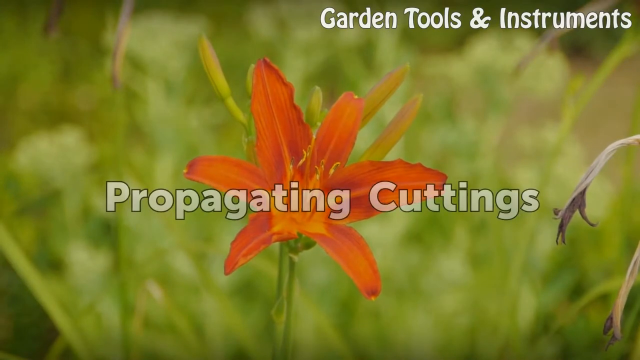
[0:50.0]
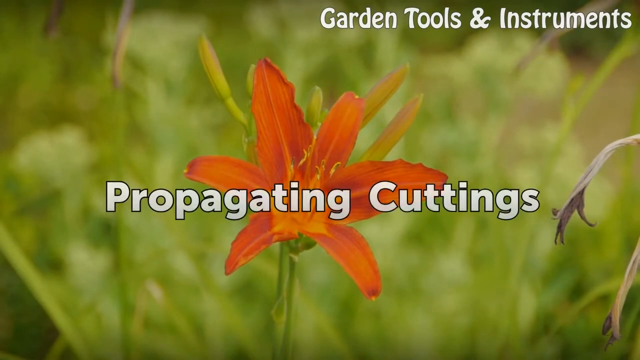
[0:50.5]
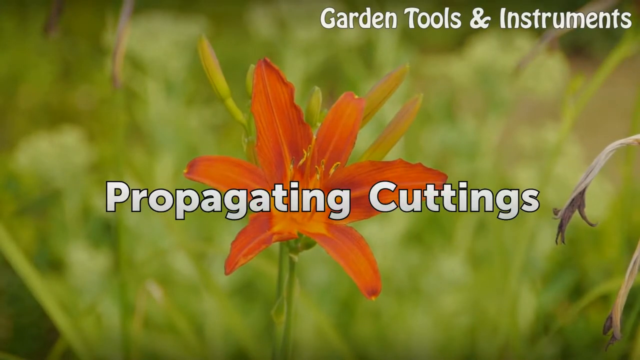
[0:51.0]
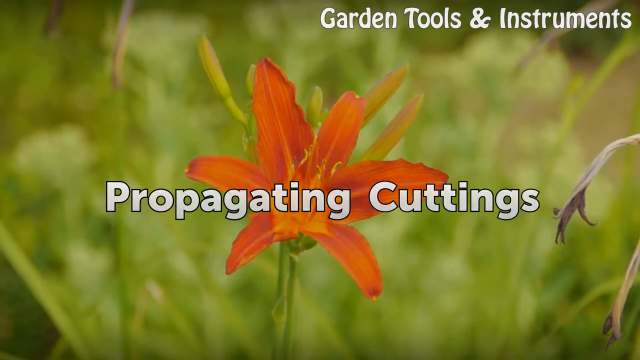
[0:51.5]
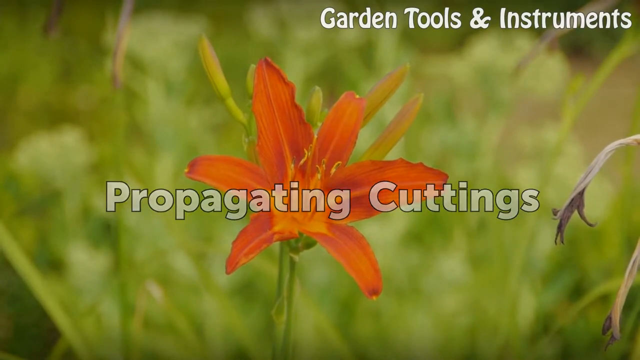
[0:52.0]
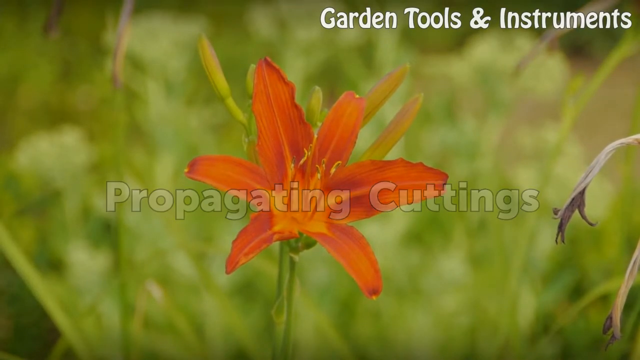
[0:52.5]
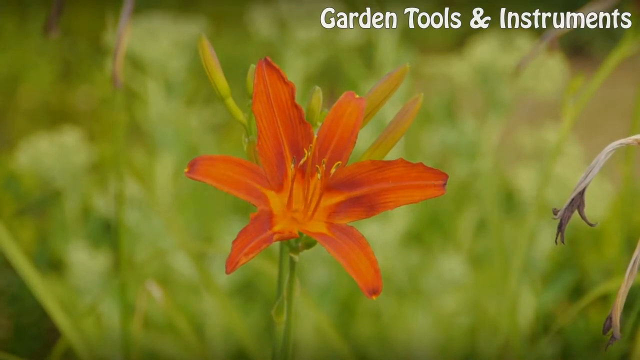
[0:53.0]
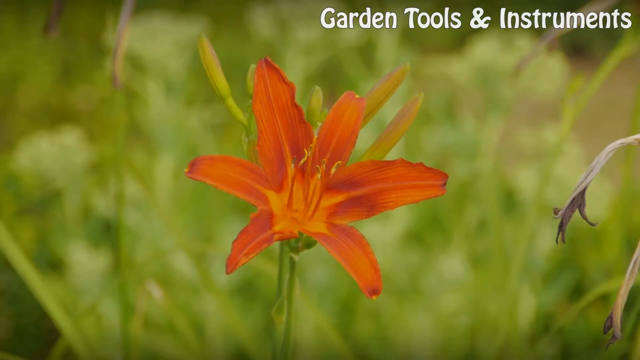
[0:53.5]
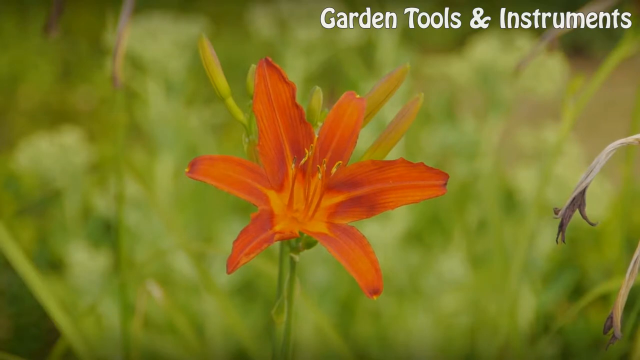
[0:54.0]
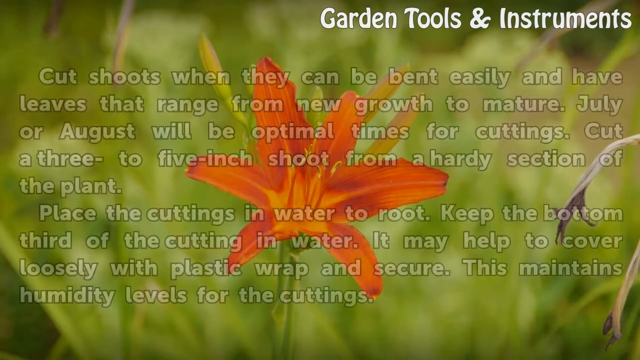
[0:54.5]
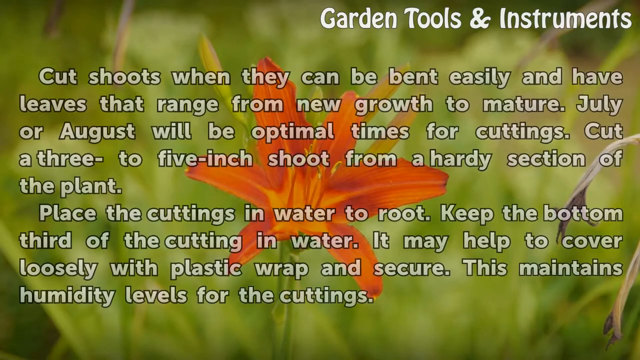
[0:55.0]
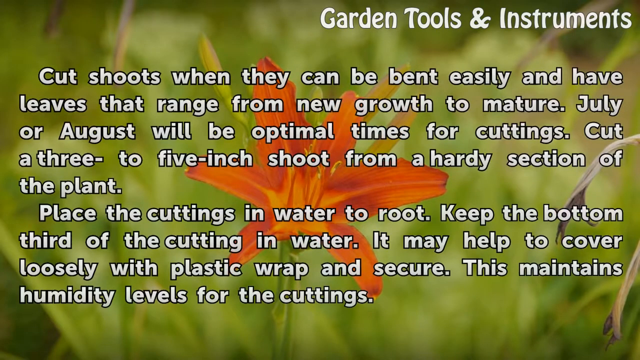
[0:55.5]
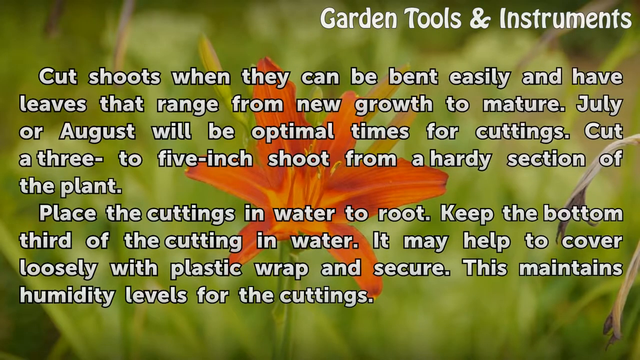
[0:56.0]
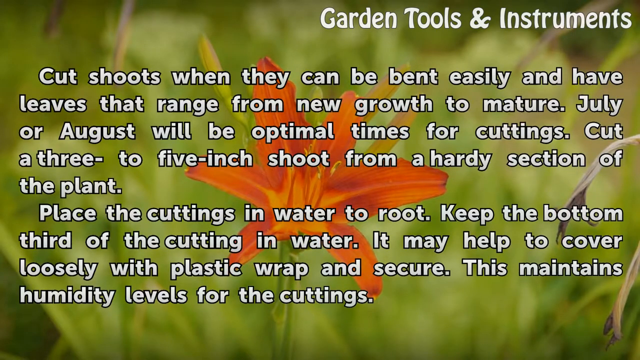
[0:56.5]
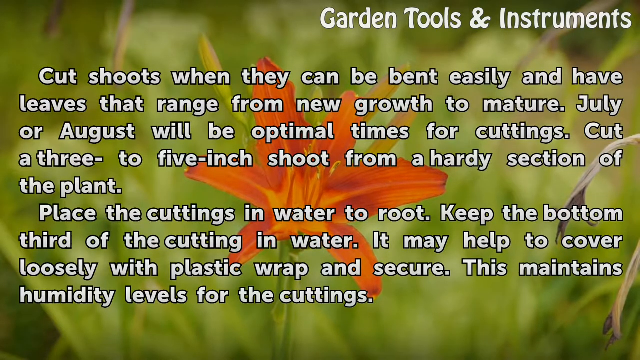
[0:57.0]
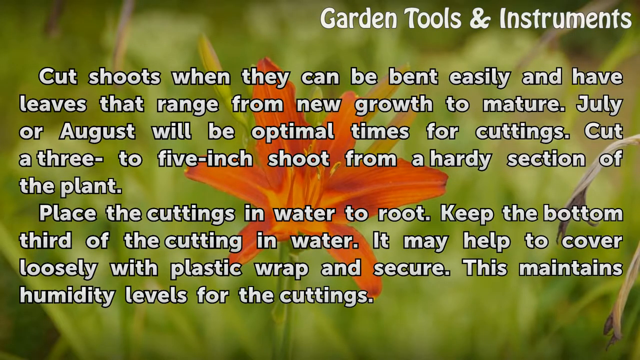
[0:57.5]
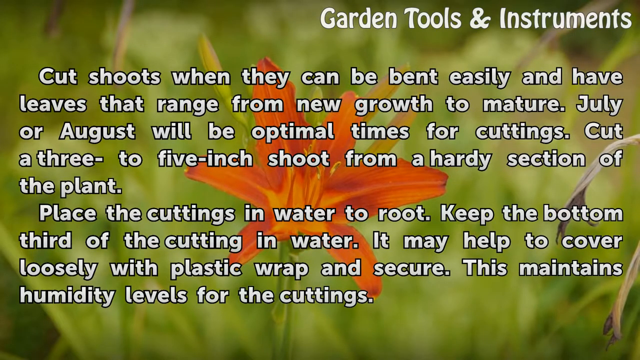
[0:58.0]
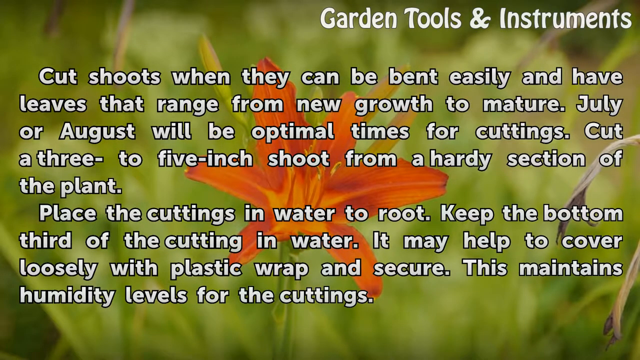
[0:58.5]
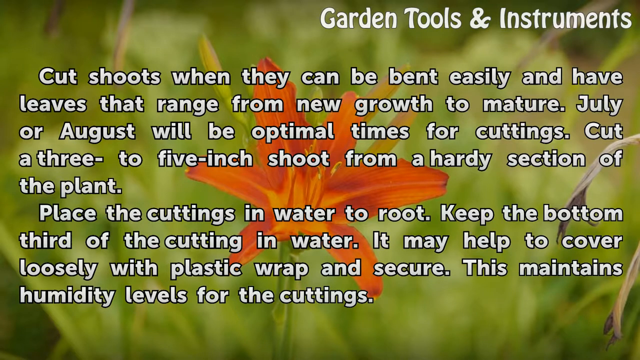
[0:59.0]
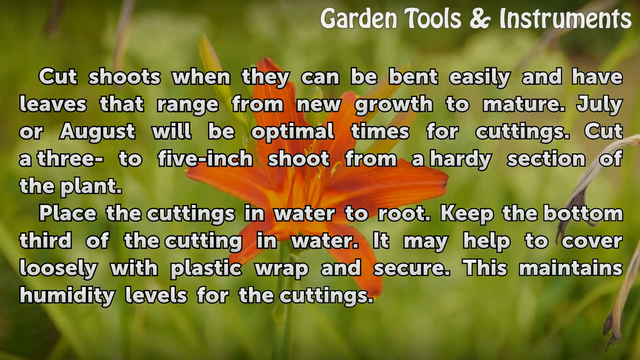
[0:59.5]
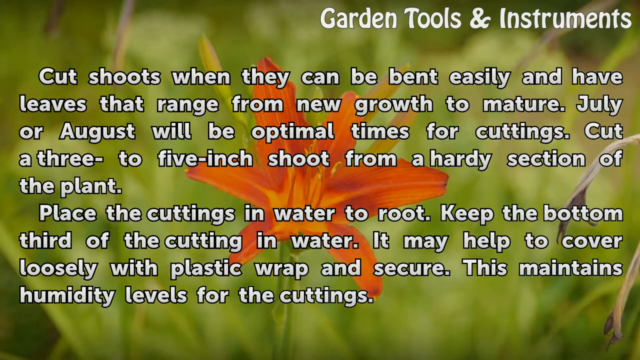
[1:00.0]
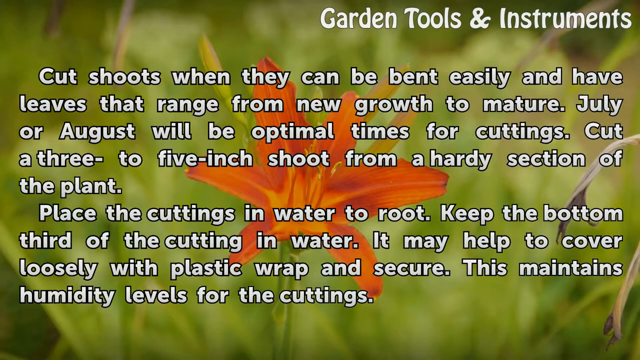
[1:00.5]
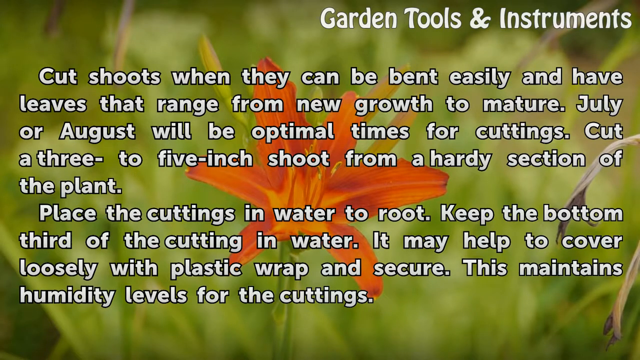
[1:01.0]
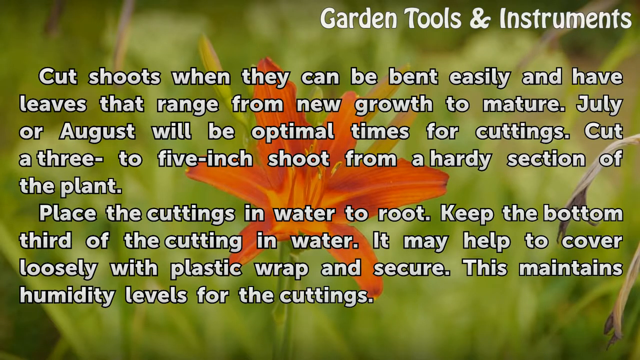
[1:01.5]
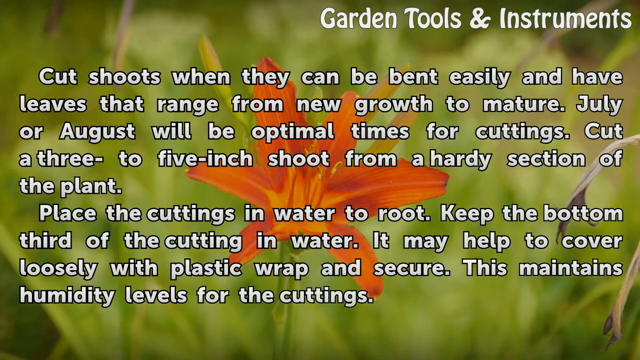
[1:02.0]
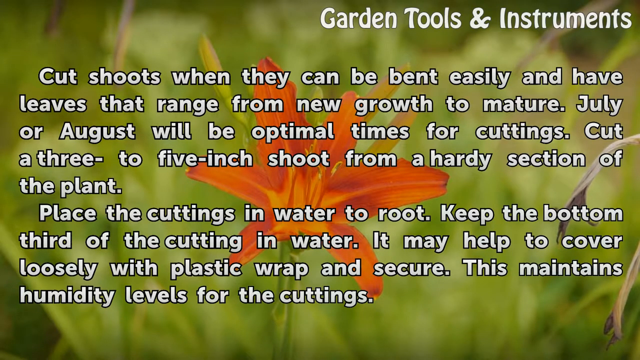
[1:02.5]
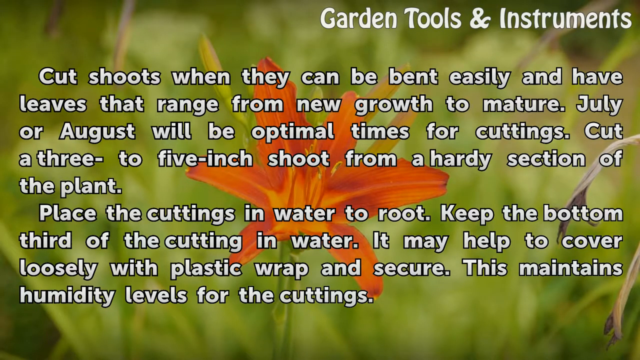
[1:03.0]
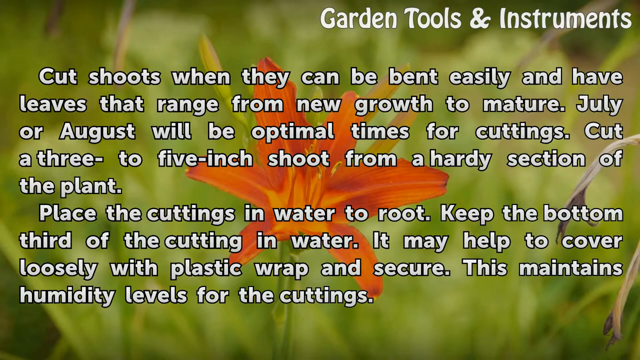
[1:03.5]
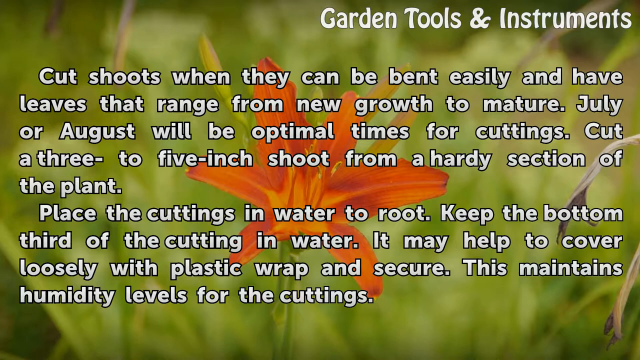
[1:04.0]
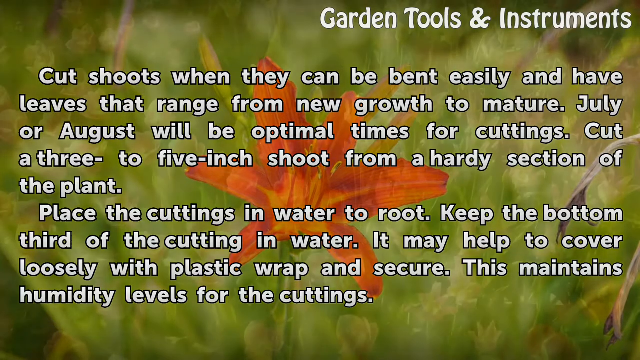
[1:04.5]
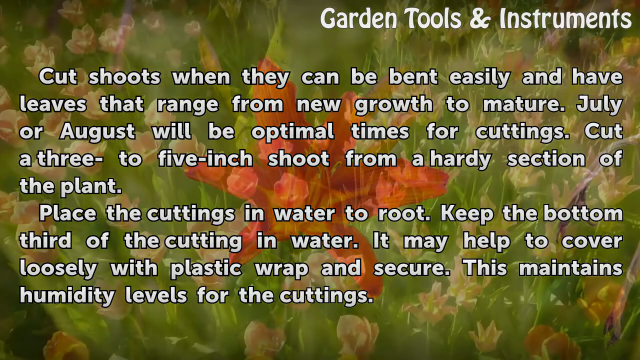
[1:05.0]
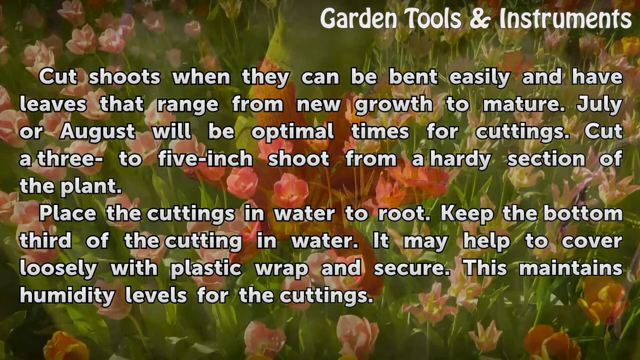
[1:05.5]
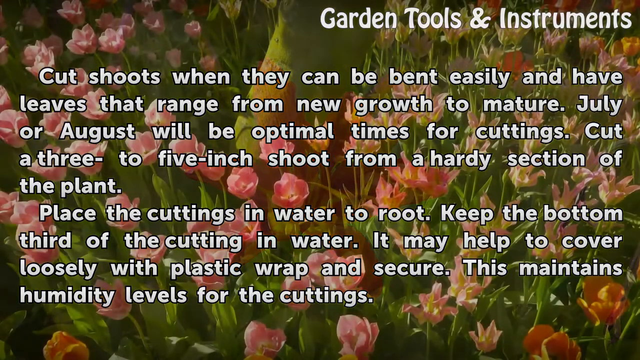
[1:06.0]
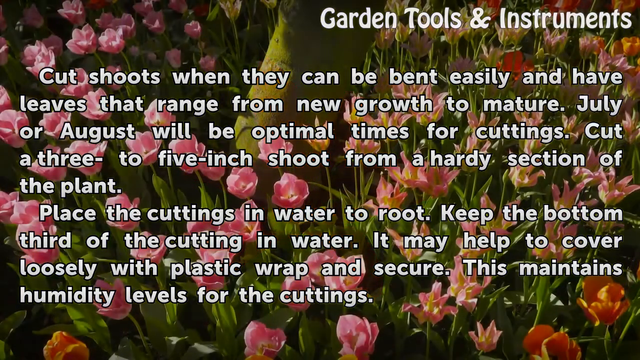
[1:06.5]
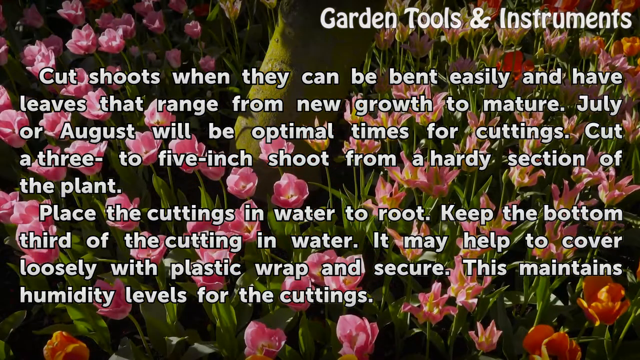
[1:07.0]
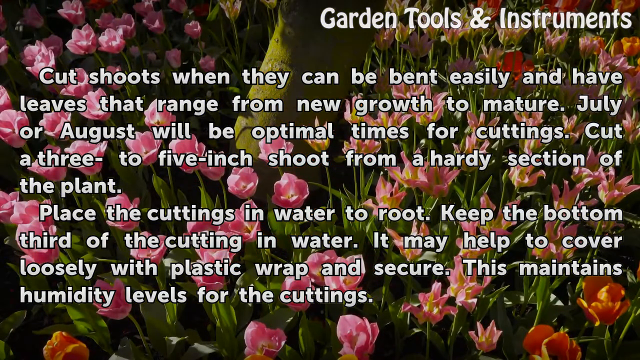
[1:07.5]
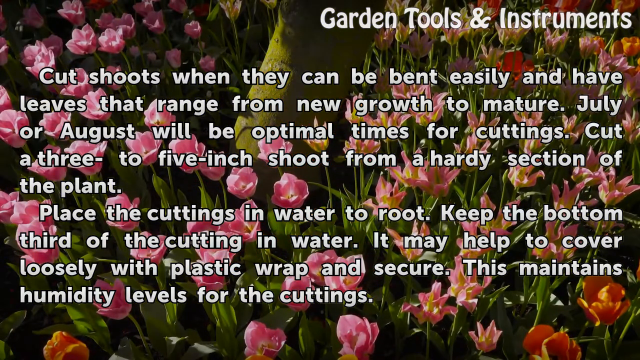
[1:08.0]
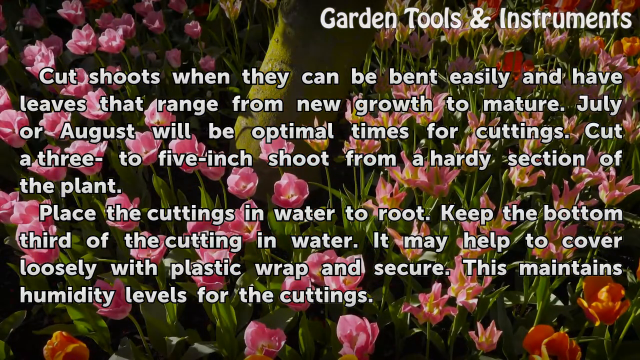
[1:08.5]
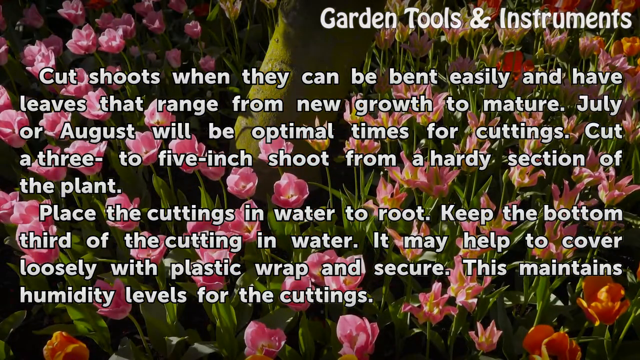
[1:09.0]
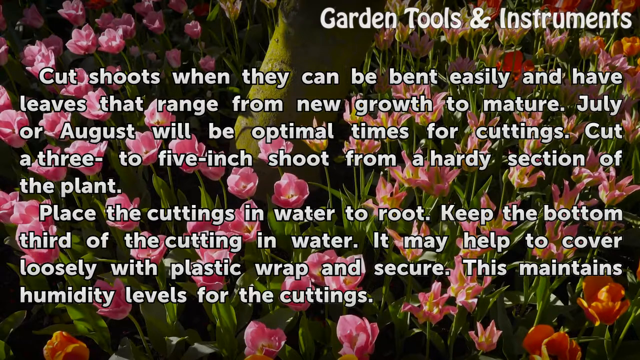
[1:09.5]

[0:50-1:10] A close-up of an orange flower with six petals is in the background, with the words "propagating cuttings" superimposed in a large white font with a very fine black border. A larger paragraph of text then appears: "cut shoots when they can be bent easily and have leaves that range from new growth to mature. July or August will be optimal times for cuttings, cut a three to five inch shoot from a hardy section of the plant, place the cuttings in water to root, keep the bottom third of the cuttings in water, it may help to cover loosely with plastic wrap and secure, this maintains humidity for the cuttings." While this text remains superimposed the whole time, the background image changes from the single orange flower to almost a field of pink flowers.